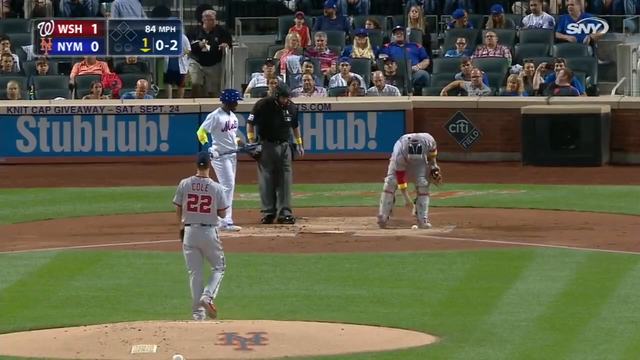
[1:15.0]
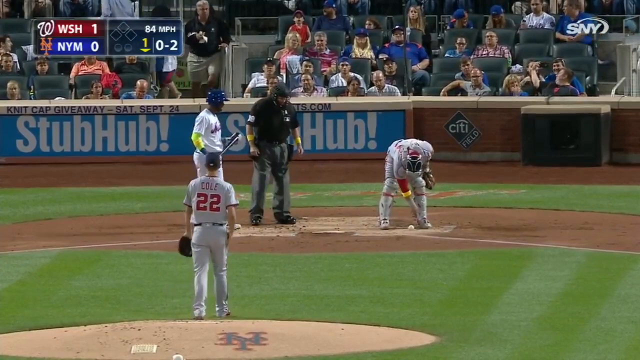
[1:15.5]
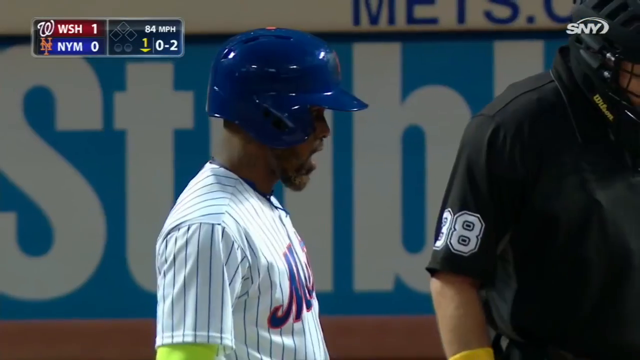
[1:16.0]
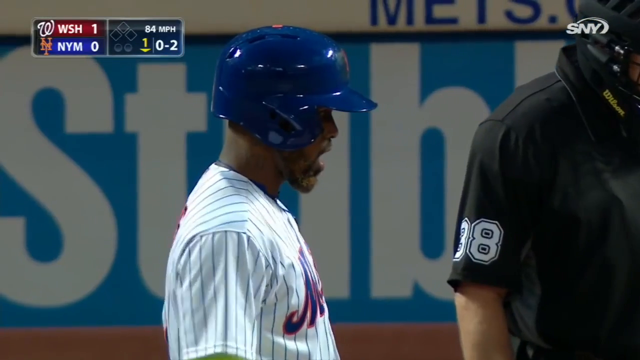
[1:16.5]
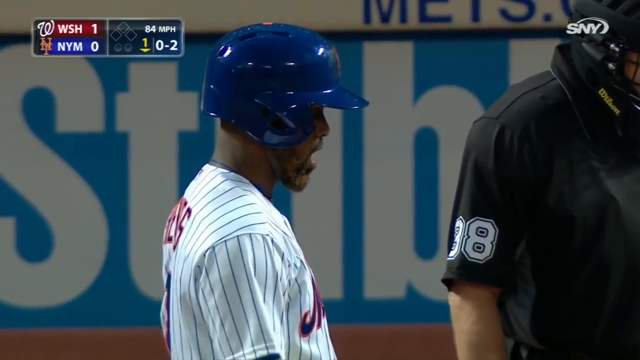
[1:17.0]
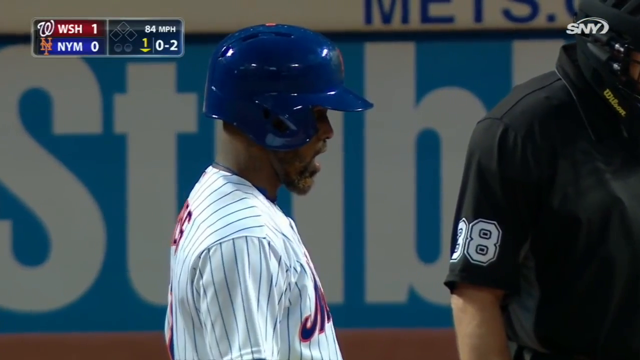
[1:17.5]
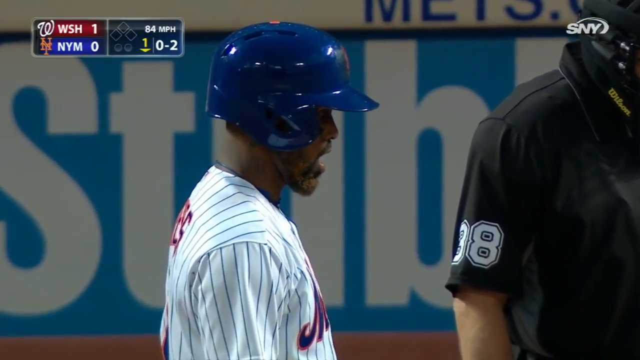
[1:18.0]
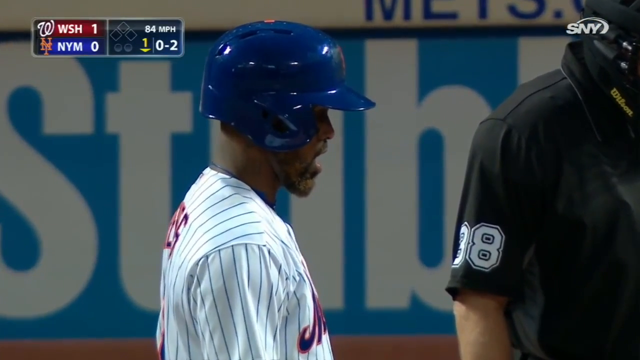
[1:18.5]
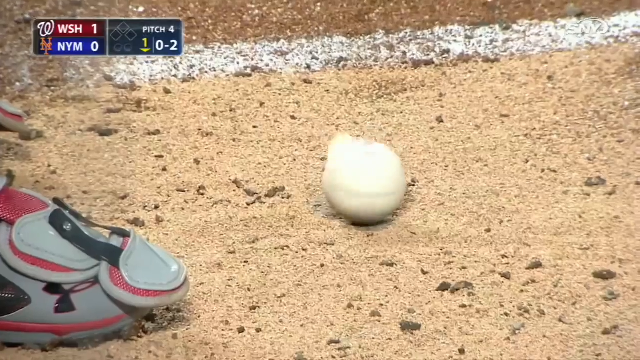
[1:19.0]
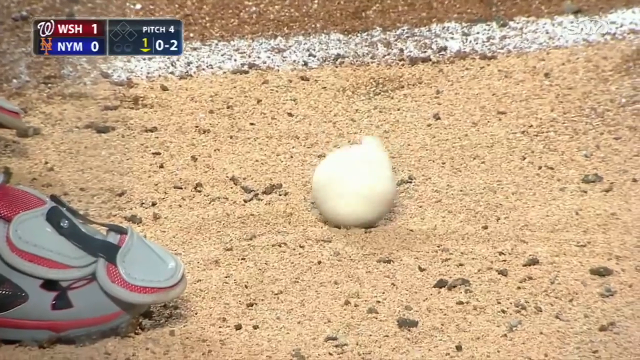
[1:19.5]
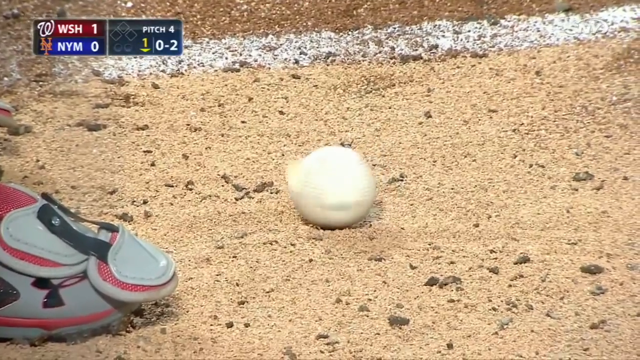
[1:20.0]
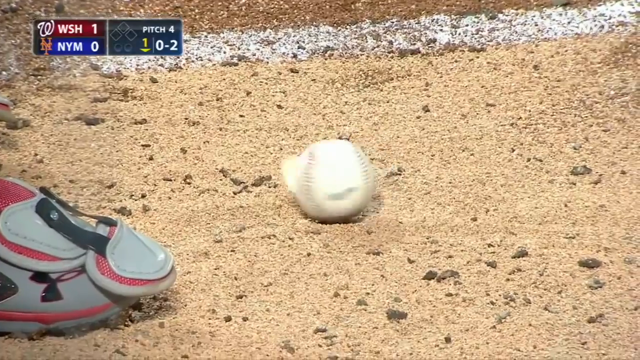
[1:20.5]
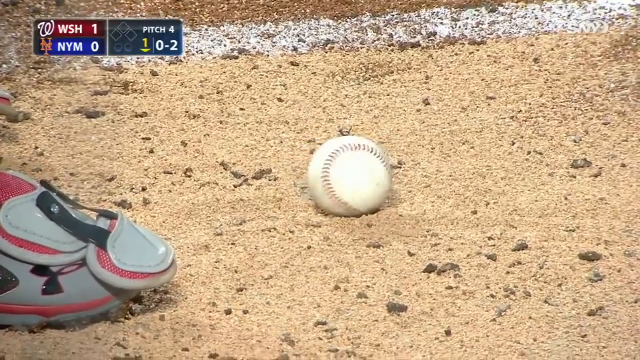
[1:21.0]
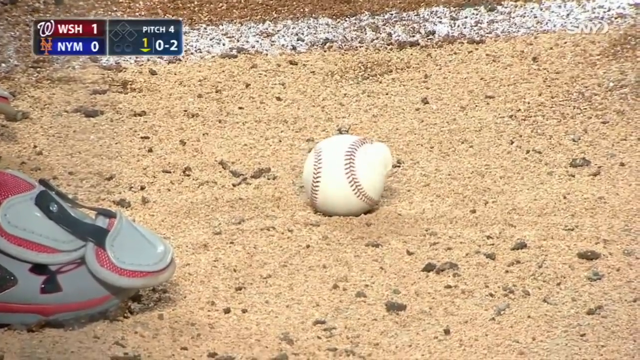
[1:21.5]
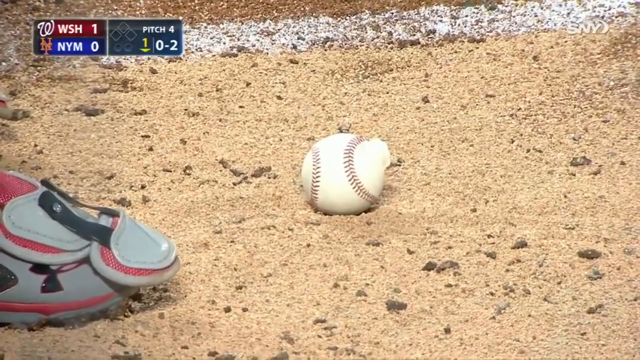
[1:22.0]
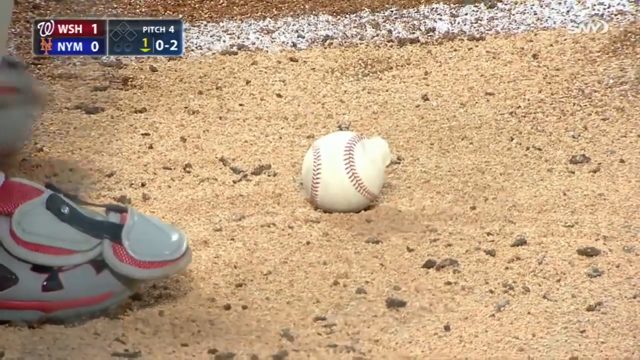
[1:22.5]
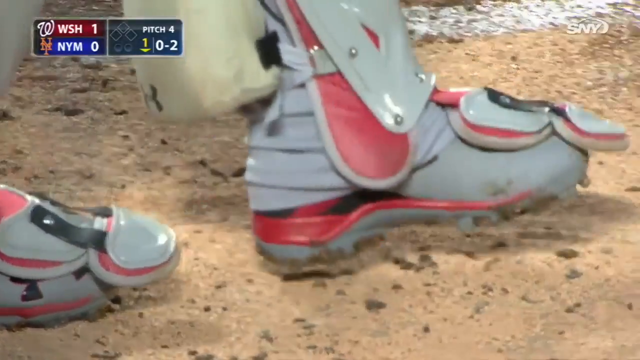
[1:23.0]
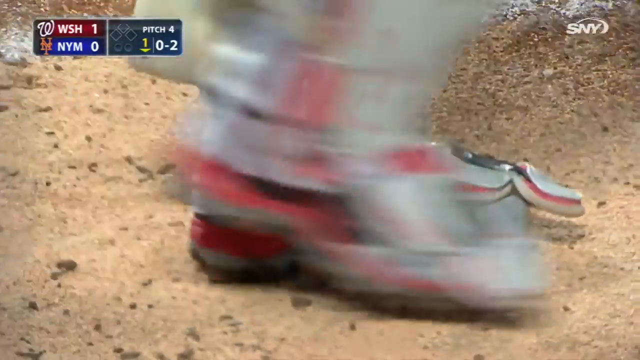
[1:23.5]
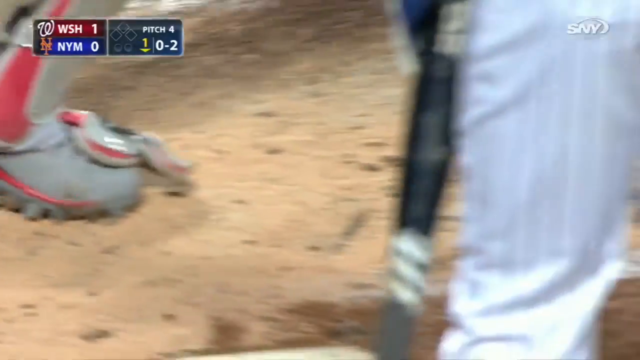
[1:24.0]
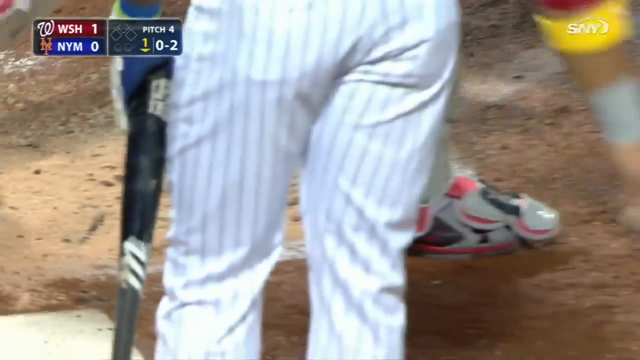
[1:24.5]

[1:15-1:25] Some fans get up out of their seats, possibly to leave the game or to get something to eat. The batter, wearing a blue helmet and a uniform that is white with tiny black stripes, has his mouth wide open and stares at the ground as another split ball spins. After the ball spins and rotates at least four times, the catcher kicks it with his gray and red cleats. The umpire just stands there. The ground is a light, dirty brown with white lines on it. The "StubHub" name is visible on advertisements.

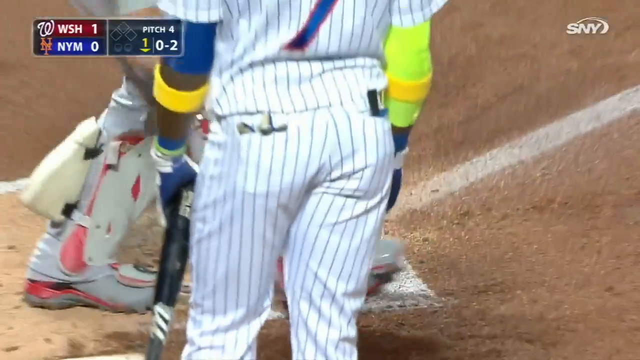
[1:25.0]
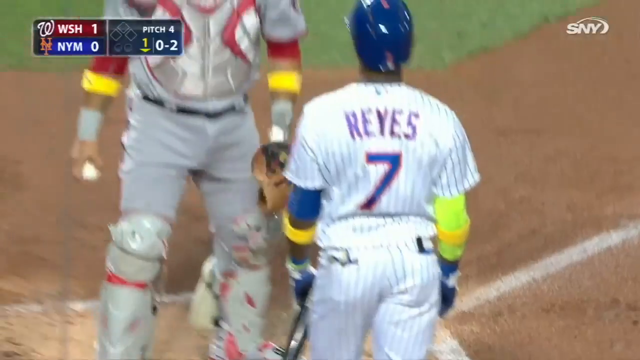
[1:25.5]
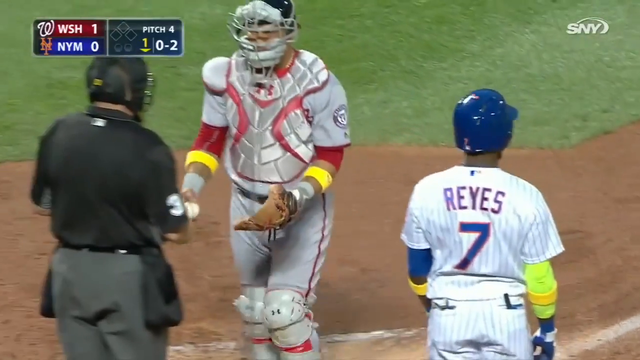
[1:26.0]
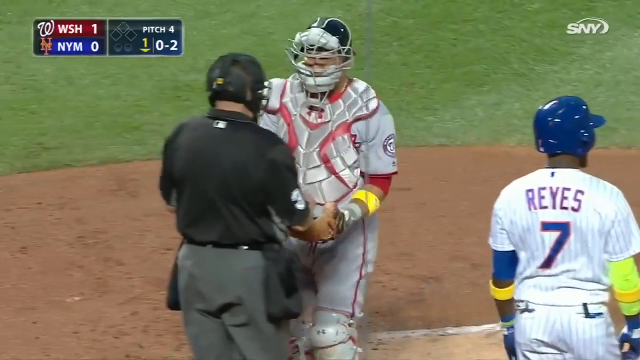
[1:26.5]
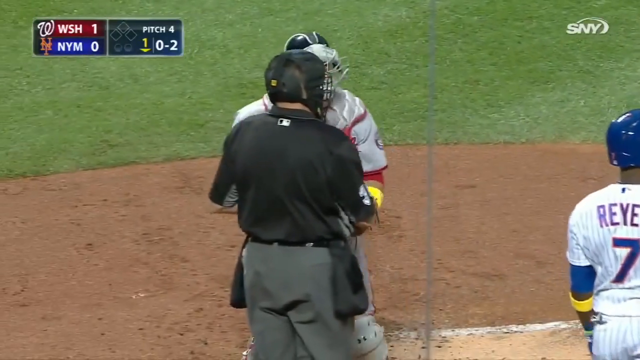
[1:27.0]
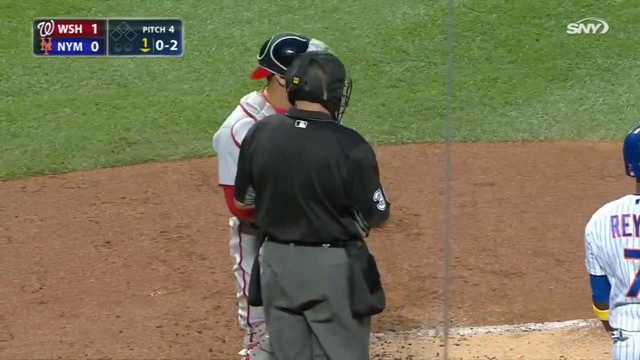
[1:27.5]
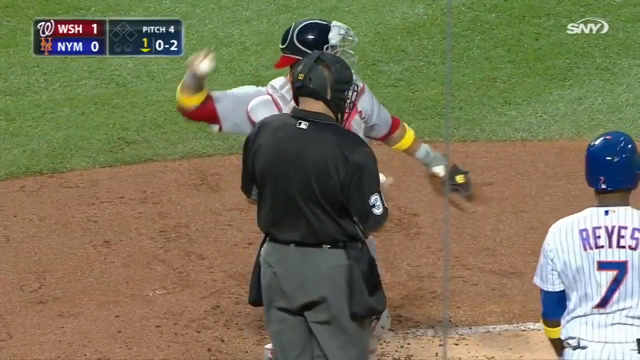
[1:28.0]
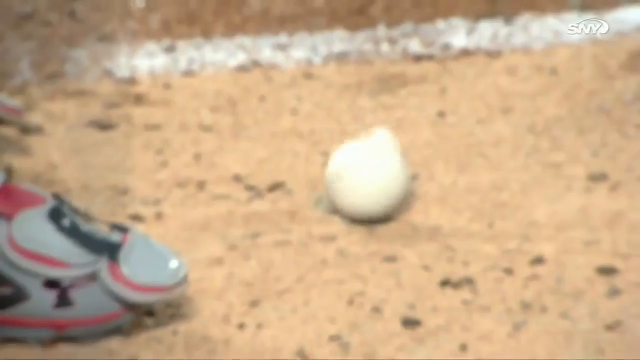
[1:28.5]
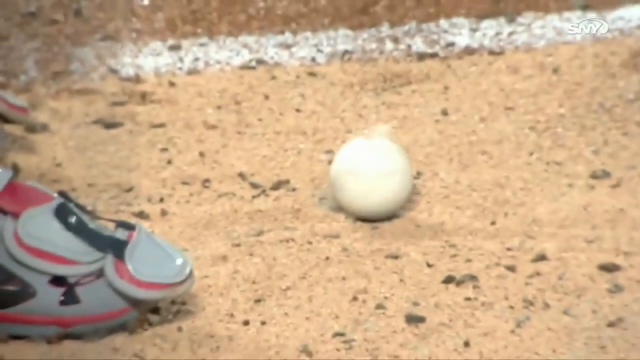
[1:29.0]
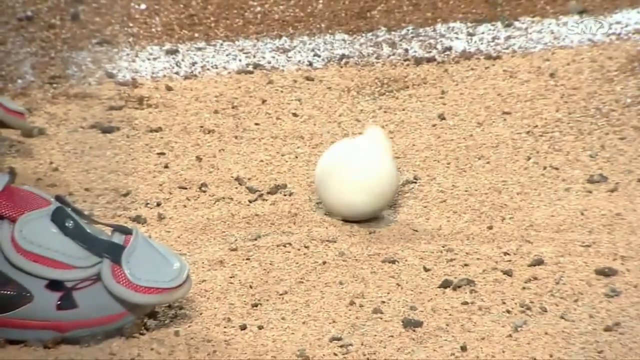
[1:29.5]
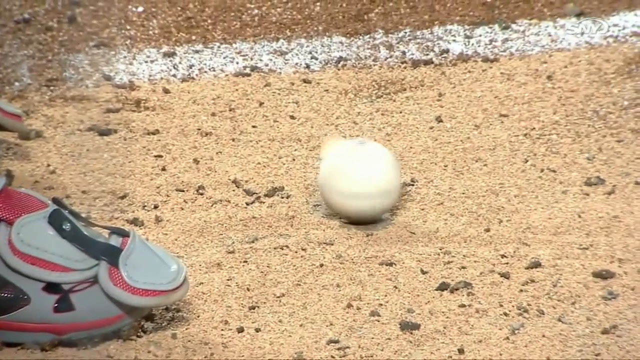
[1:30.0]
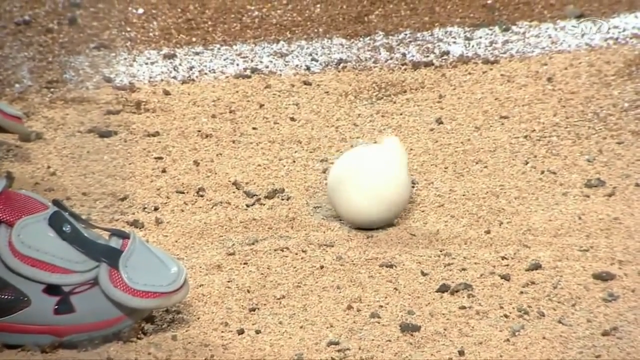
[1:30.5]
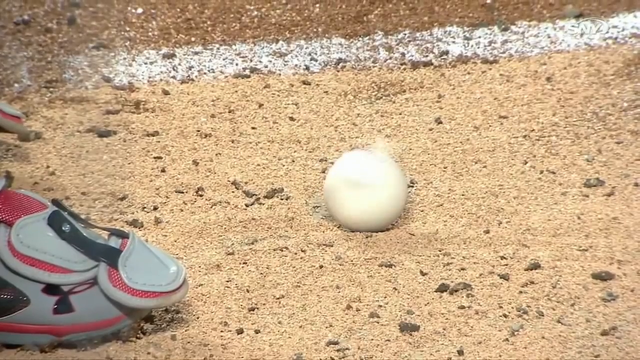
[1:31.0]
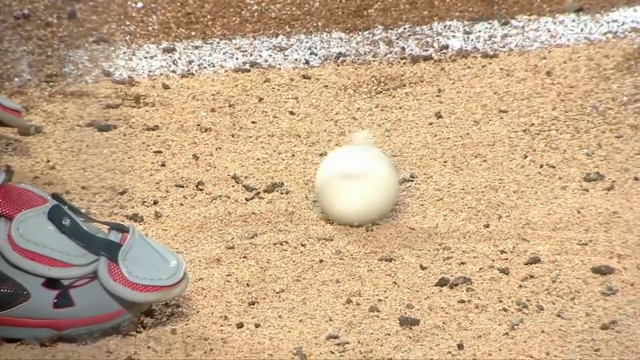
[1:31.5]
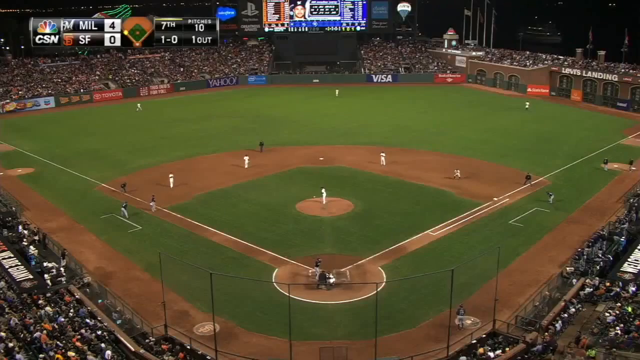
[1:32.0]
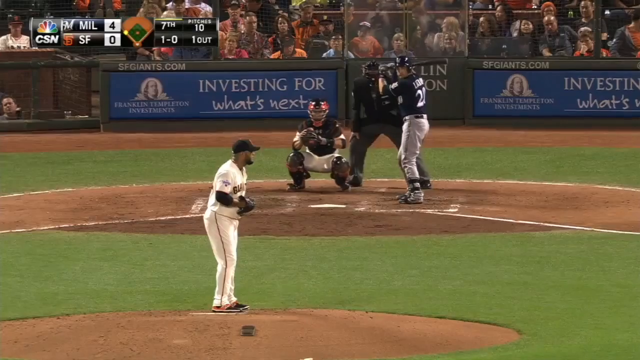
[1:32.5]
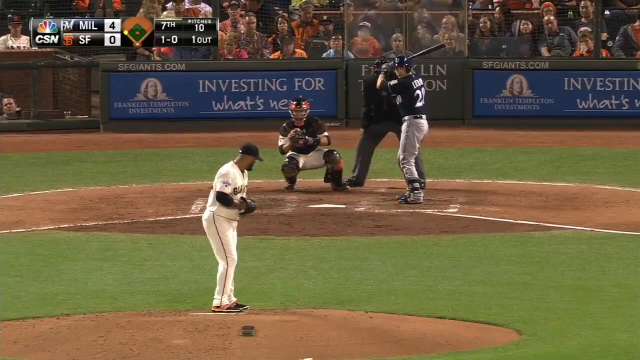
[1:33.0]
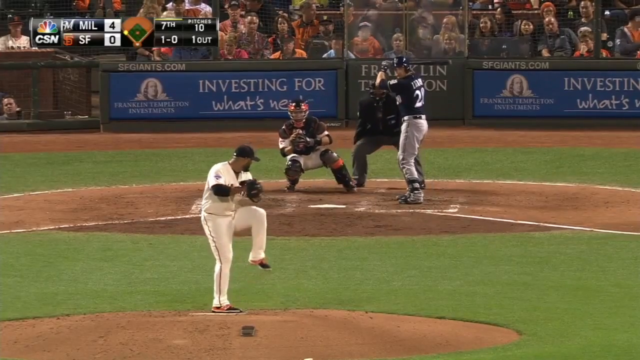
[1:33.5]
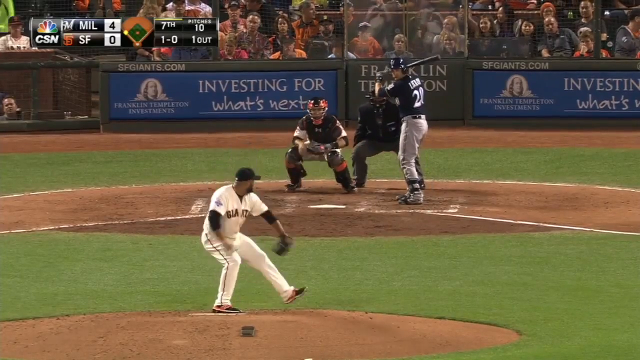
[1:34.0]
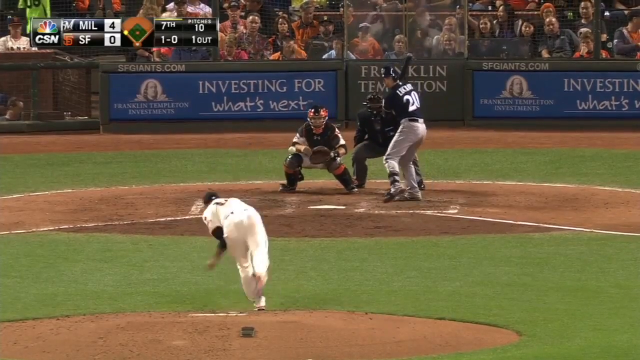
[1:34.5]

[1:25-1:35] The catcher picks up the torn ball and hands it to the umpire, who hands him a new ball. A replay of the spinning ball follows, and then the pitcher throws to the batter. After the new ball is put into play, a wide overview shows the entire field: nine players, the umpire behind the plate, and three other umpires standing at first, second and third base, along with base coaches at third and first. The umpires wear black jackets and gray pants. The home plate umpire and the catcher both wear face masks, and the home plate umpire has two sacks on his hips holding extra baseballs.